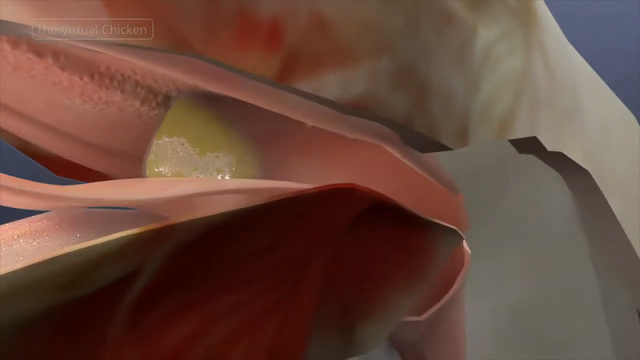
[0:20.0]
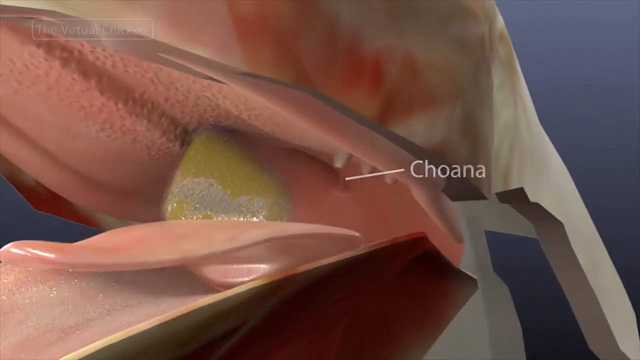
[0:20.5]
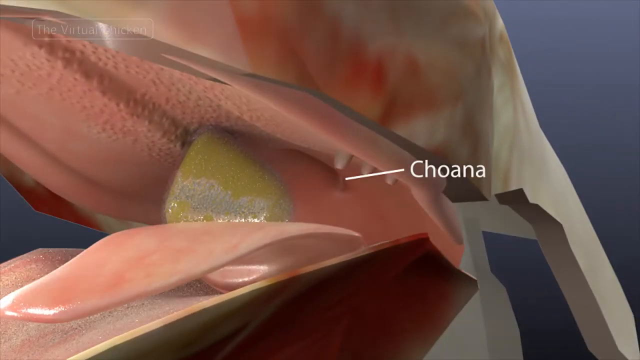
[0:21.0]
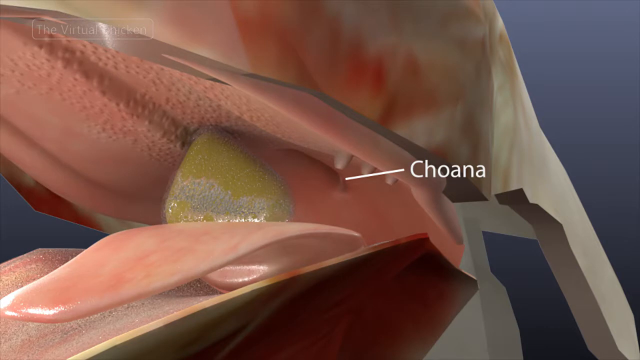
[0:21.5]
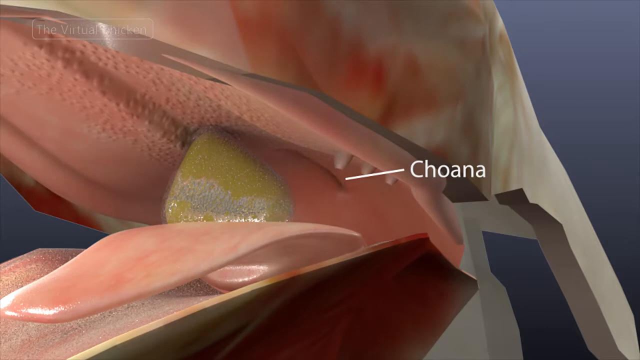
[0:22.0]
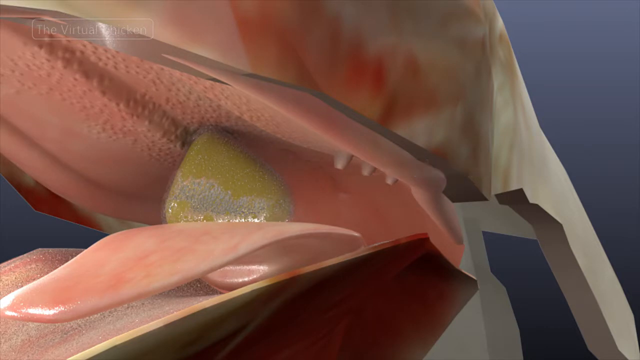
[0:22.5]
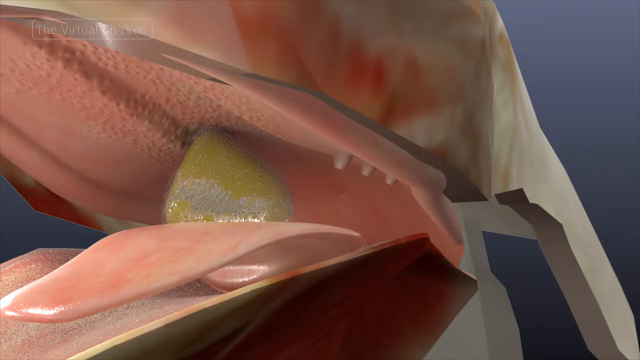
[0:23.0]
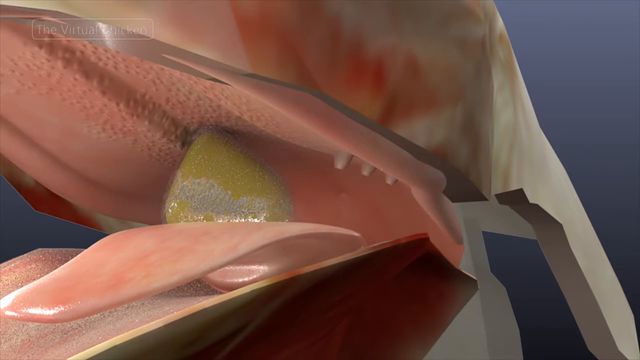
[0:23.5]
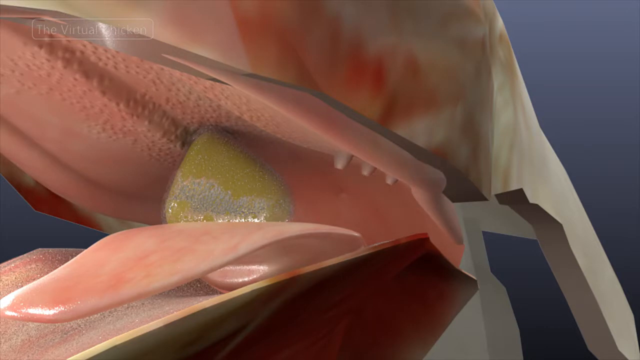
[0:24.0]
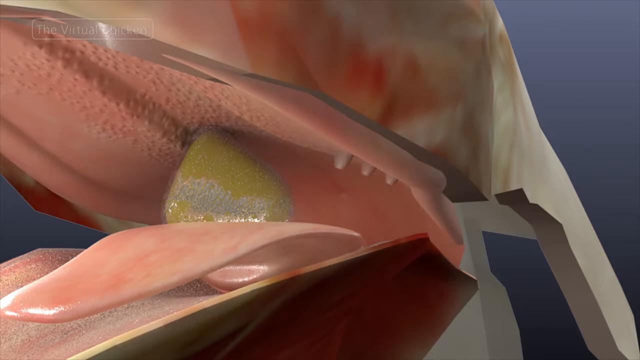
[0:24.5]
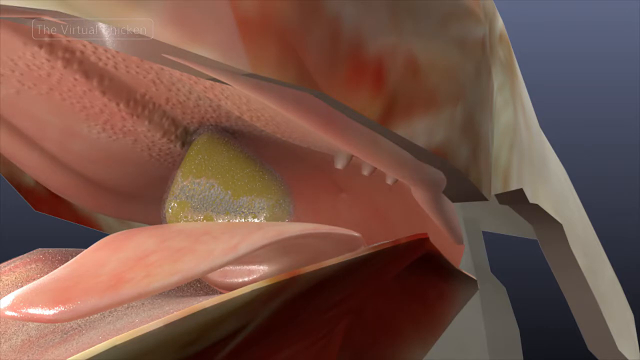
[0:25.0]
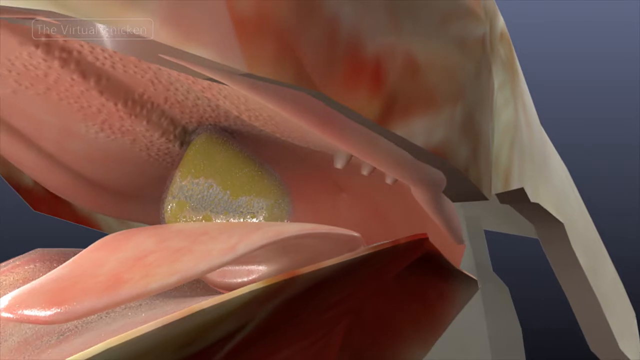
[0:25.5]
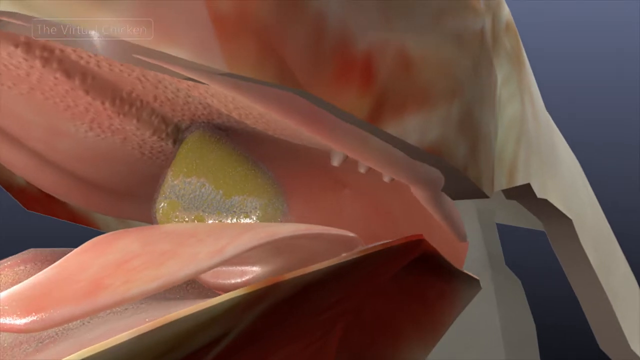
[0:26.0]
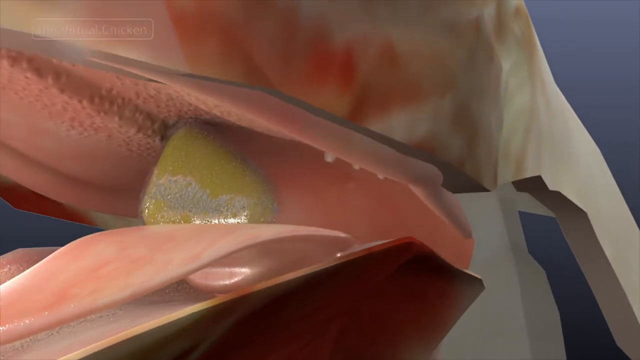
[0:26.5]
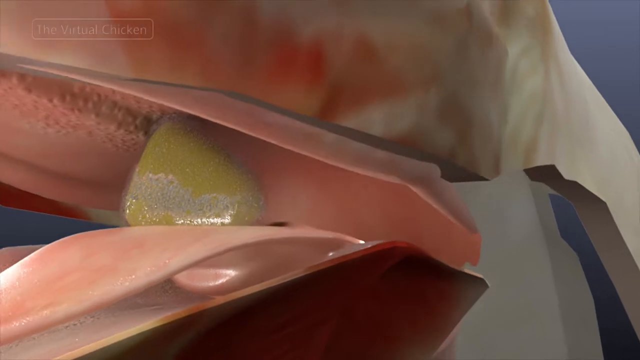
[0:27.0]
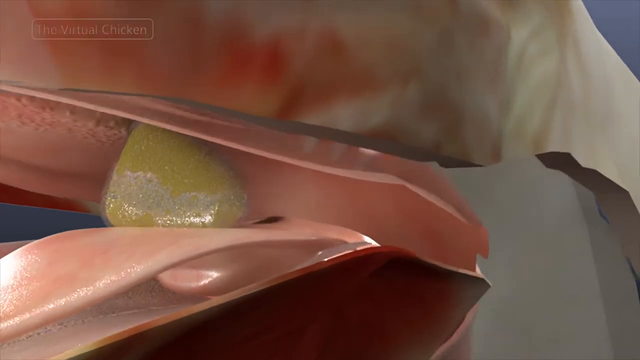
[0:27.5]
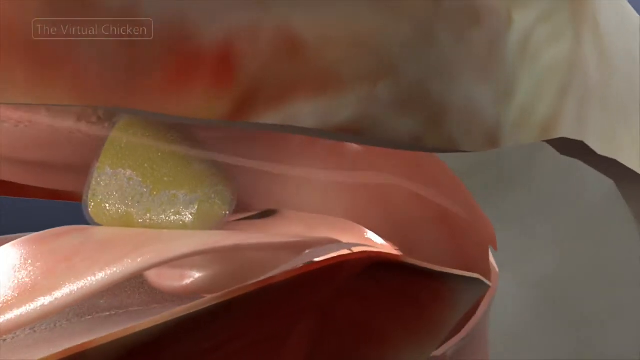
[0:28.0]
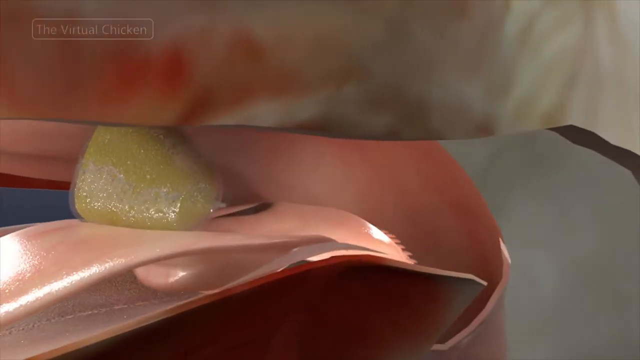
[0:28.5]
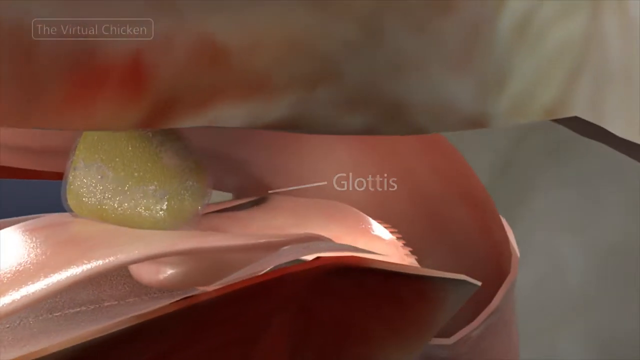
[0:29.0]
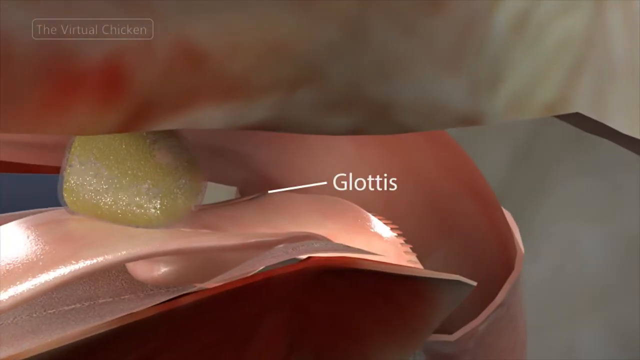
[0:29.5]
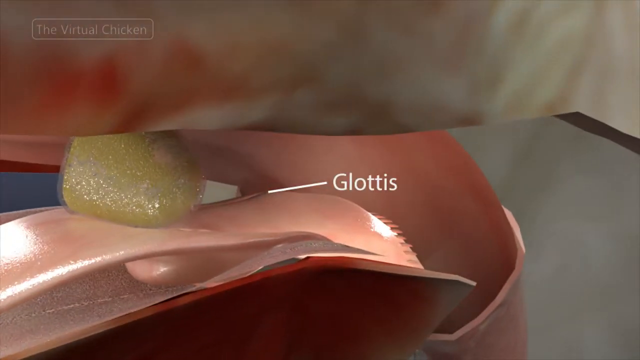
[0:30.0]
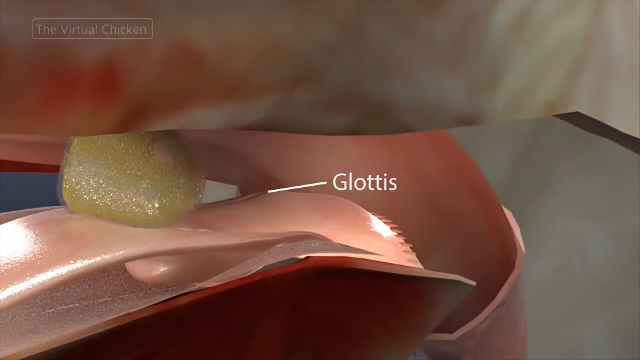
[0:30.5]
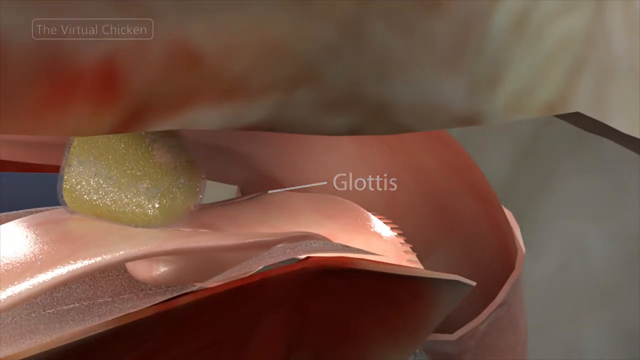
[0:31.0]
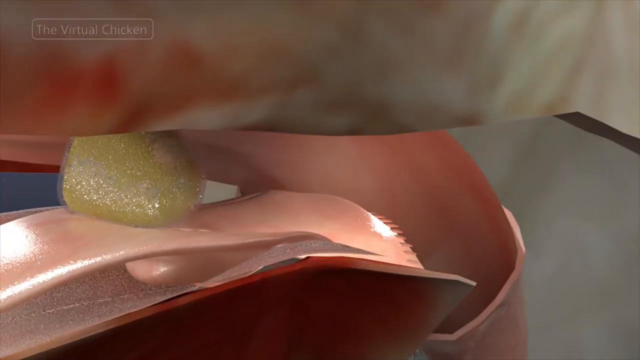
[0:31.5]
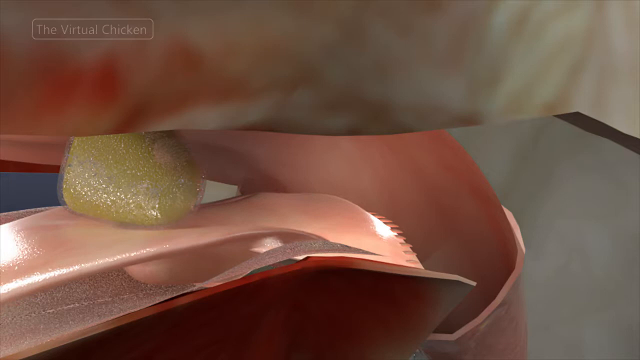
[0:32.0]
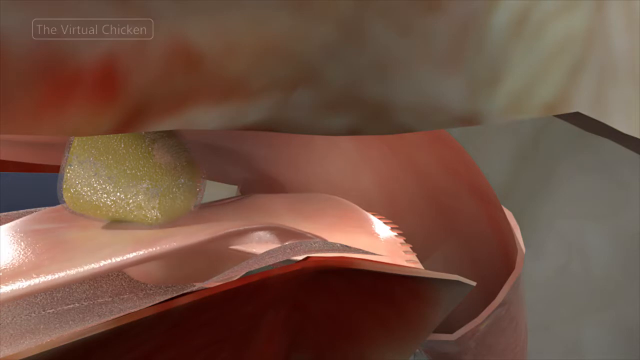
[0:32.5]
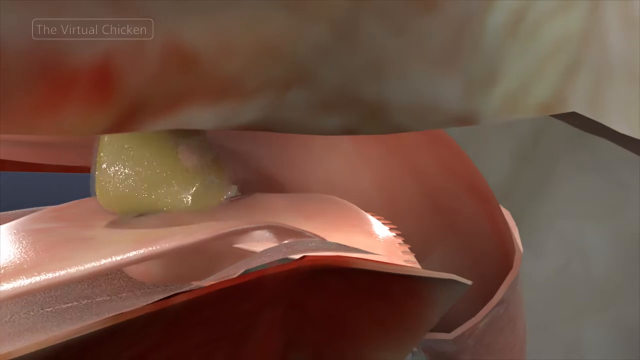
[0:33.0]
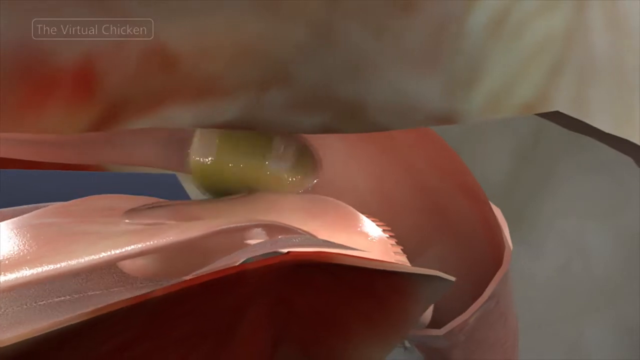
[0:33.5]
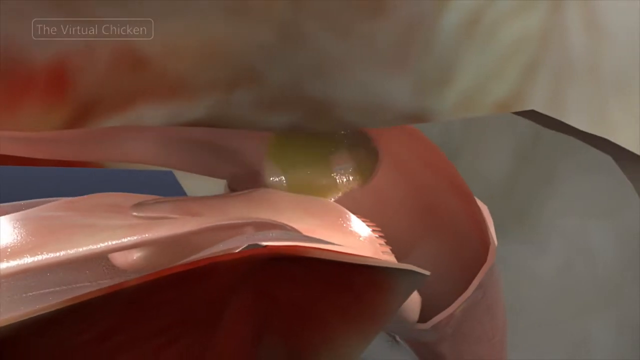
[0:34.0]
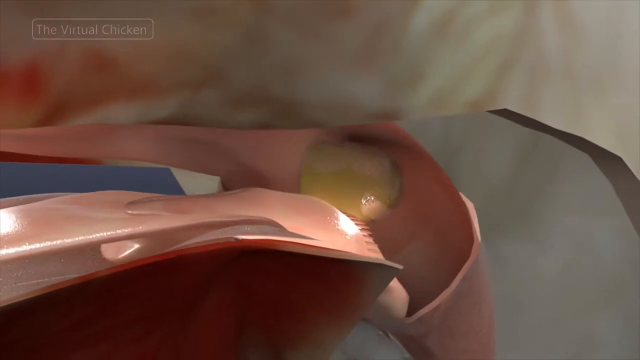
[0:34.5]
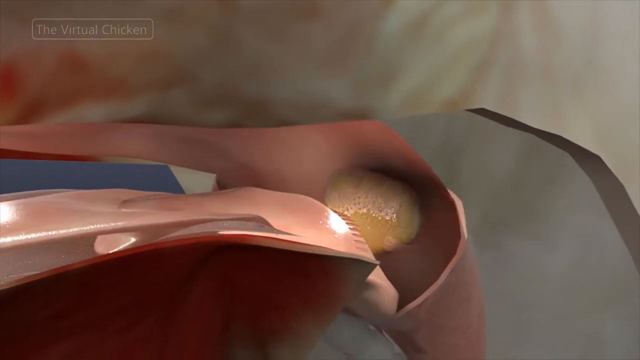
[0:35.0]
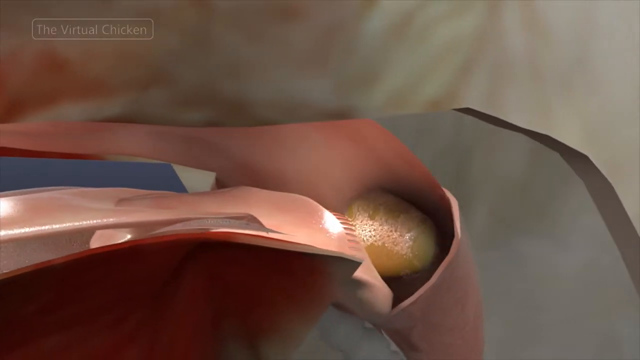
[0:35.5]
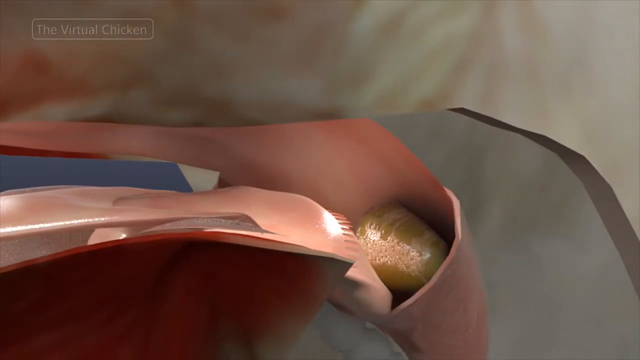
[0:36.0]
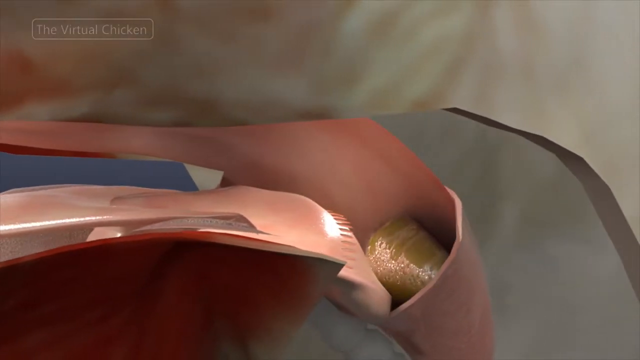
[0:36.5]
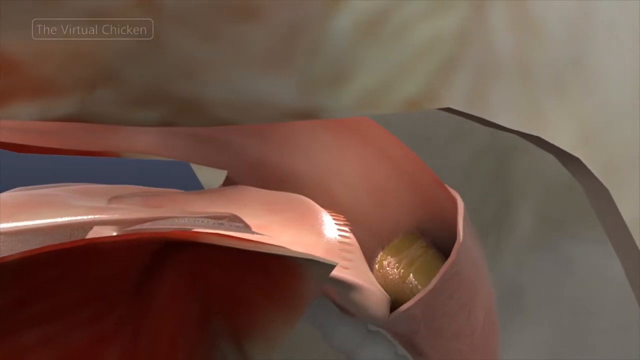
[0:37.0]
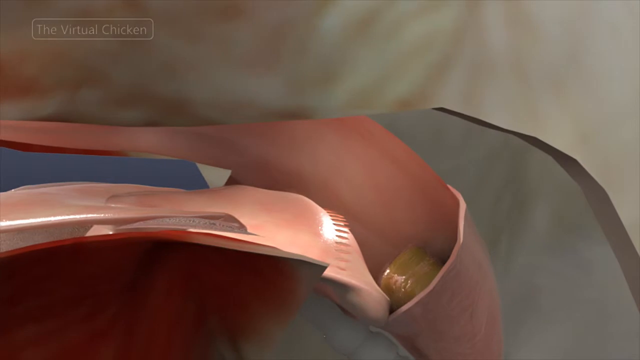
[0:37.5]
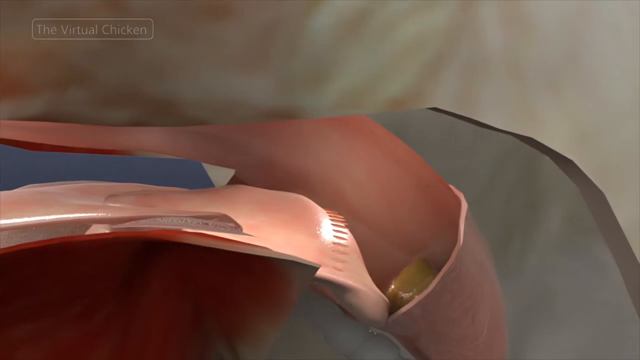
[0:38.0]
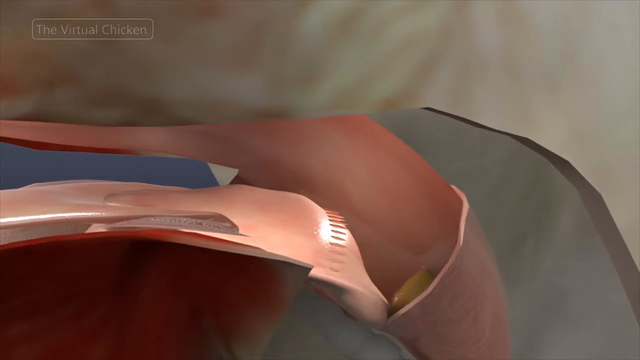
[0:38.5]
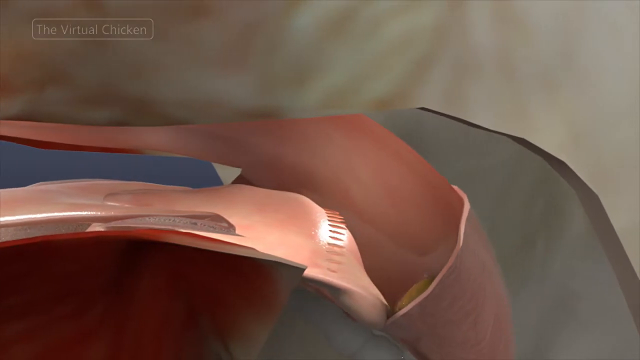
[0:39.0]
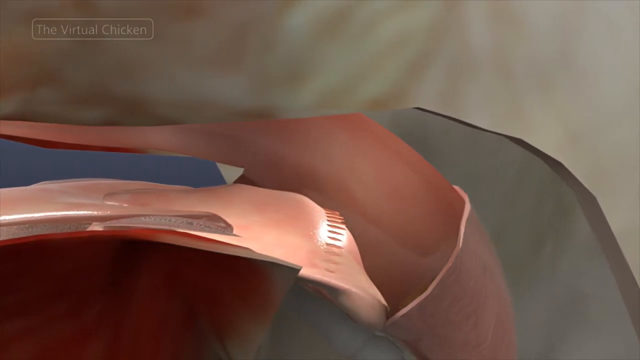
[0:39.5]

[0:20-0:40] The esophagus of a chicken is shown along with the chicken's head, which has something red on top; the whole chicken looks white. The chicken's eyes and mouth are visible. The chicken is swallowing something, and the glottis inside the chicken's mouth is shown as the place where the food goes down. The chicken's esophagus is then shown.